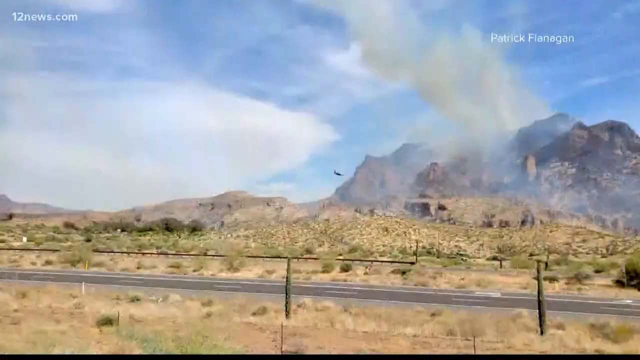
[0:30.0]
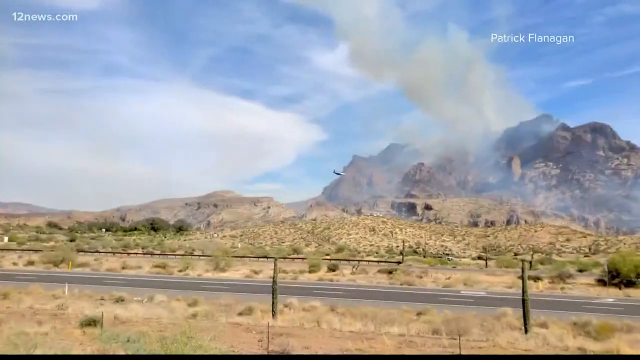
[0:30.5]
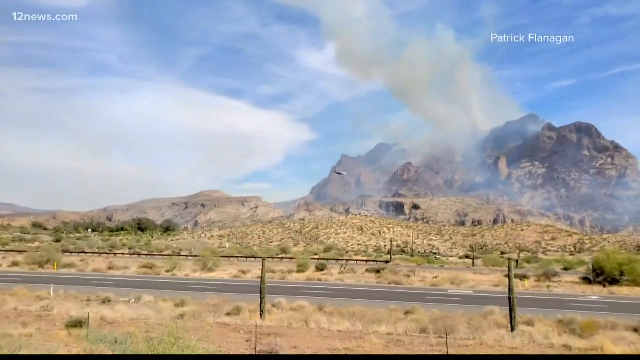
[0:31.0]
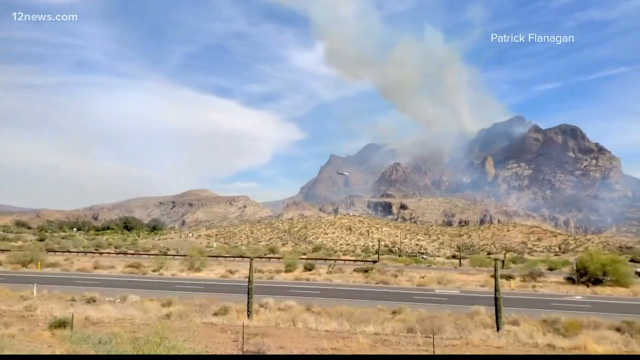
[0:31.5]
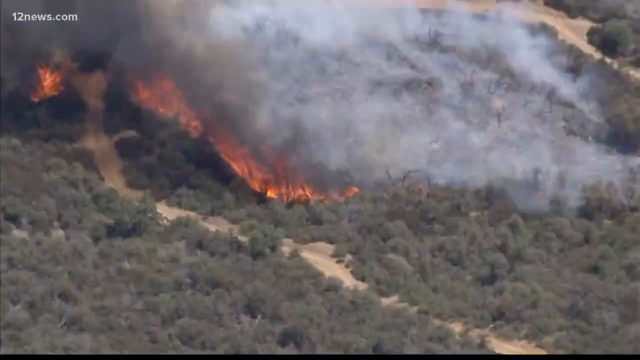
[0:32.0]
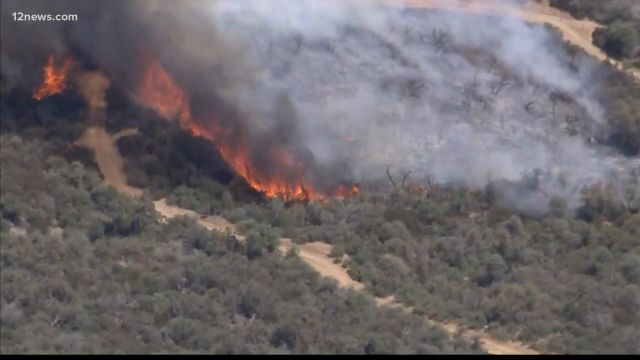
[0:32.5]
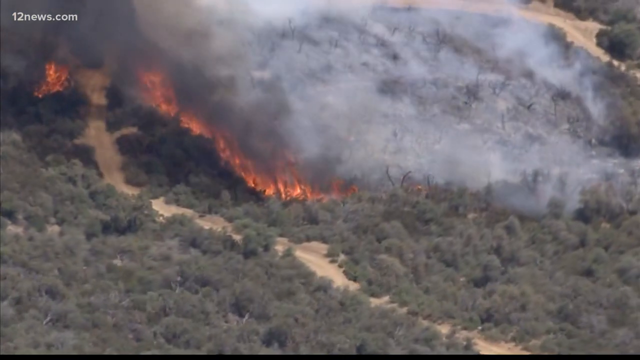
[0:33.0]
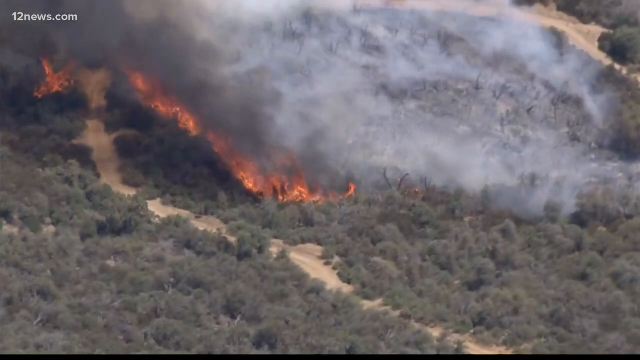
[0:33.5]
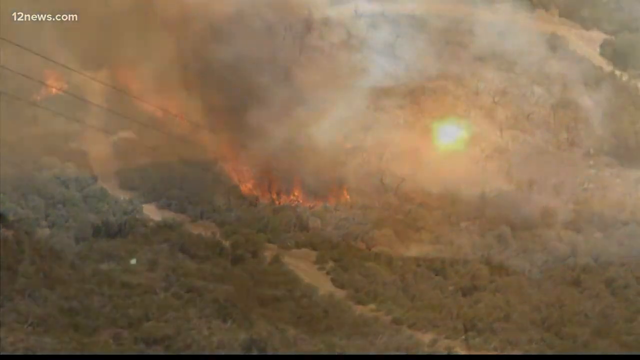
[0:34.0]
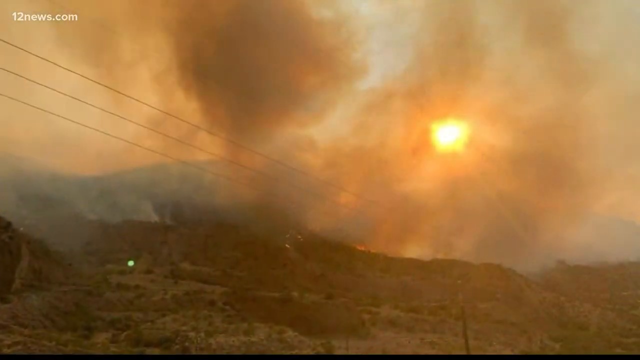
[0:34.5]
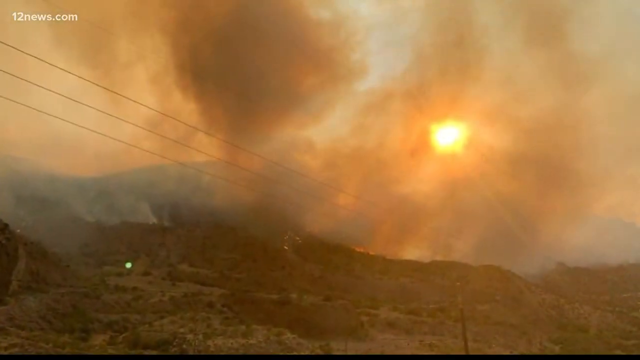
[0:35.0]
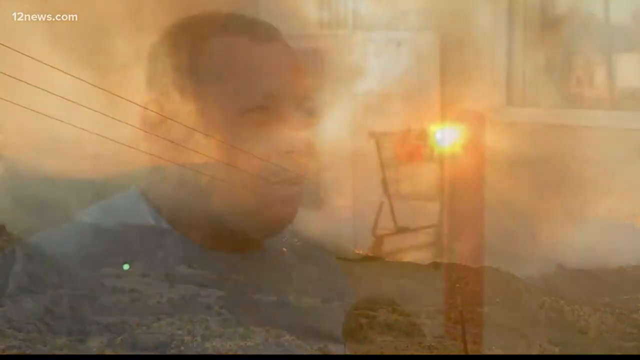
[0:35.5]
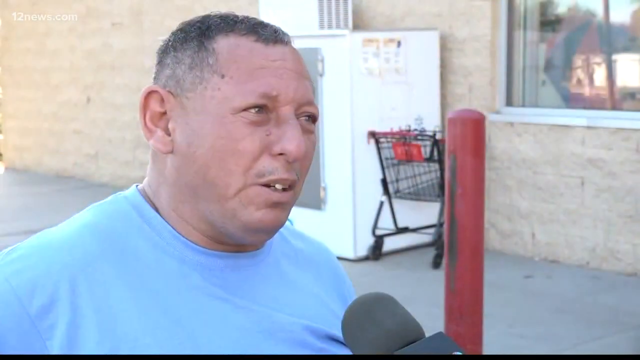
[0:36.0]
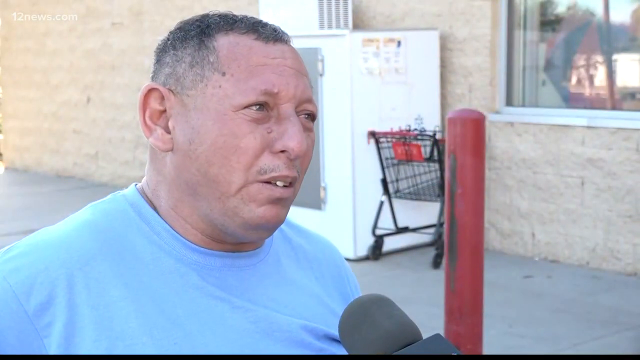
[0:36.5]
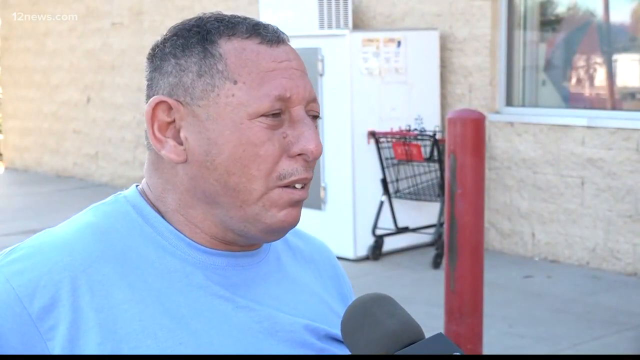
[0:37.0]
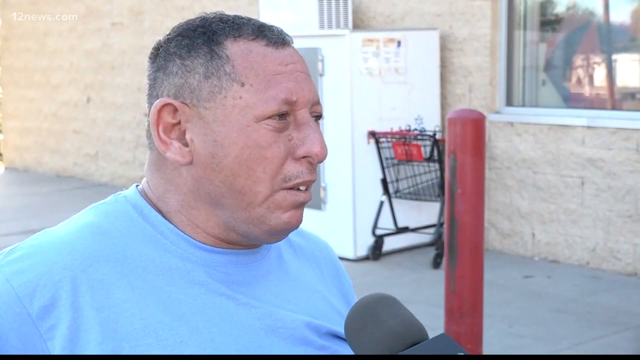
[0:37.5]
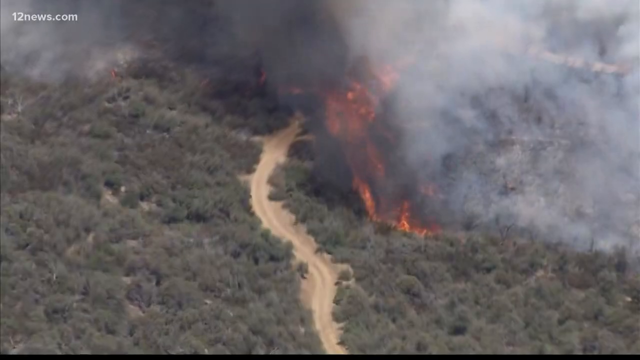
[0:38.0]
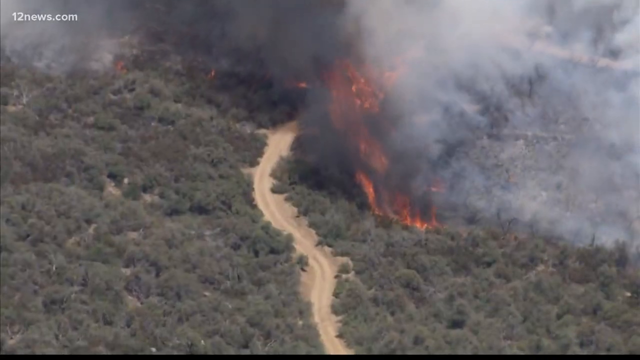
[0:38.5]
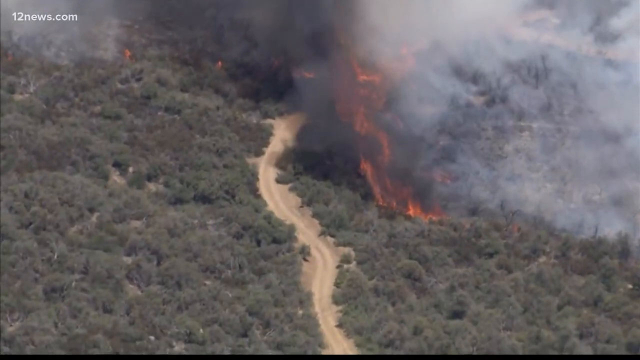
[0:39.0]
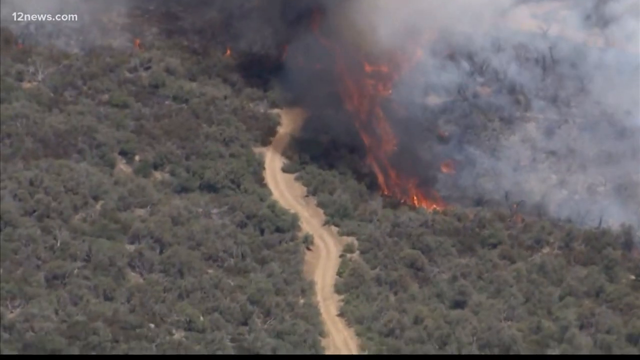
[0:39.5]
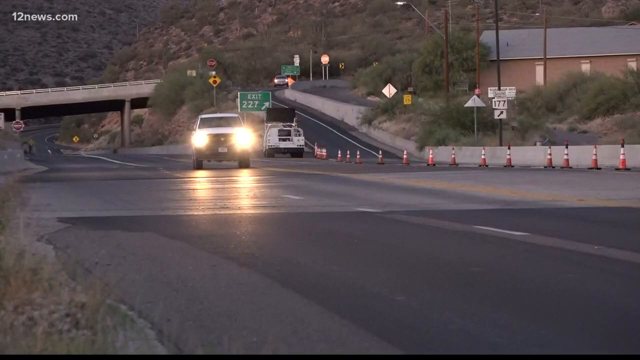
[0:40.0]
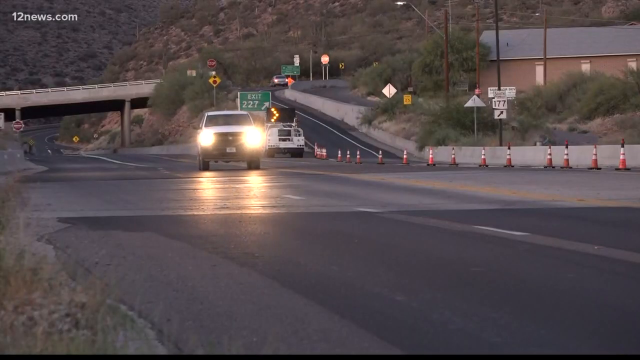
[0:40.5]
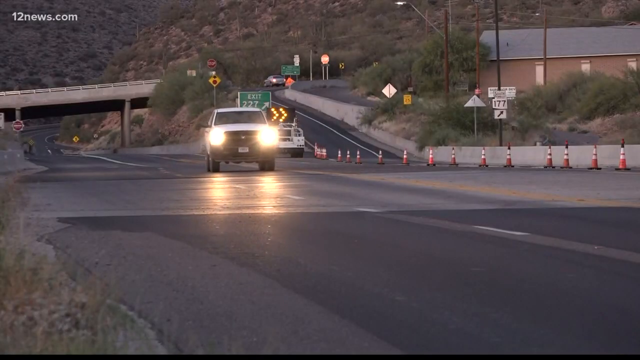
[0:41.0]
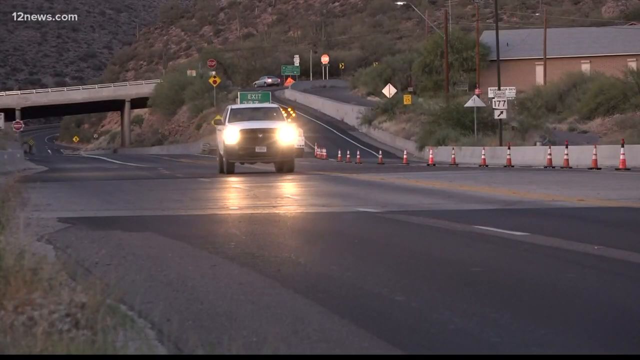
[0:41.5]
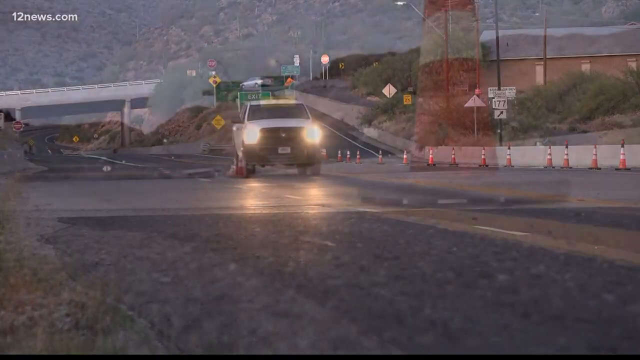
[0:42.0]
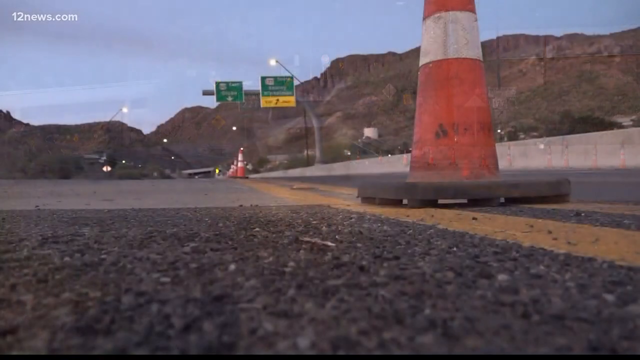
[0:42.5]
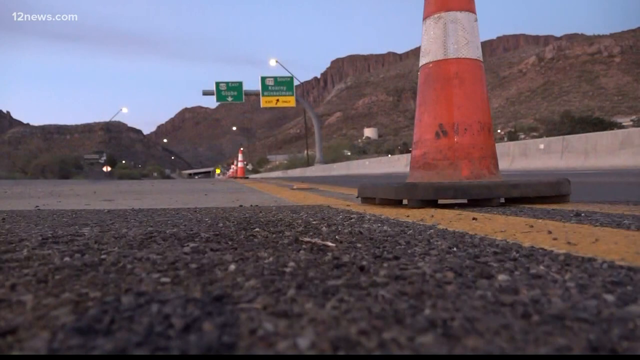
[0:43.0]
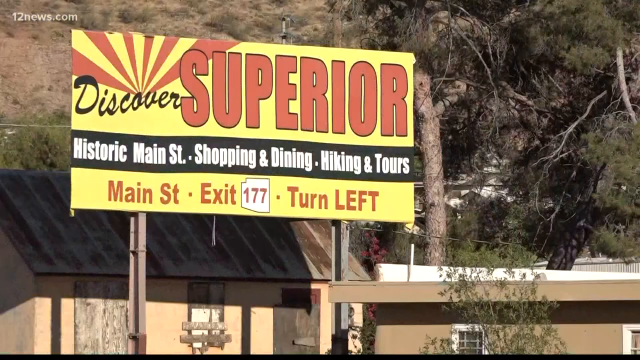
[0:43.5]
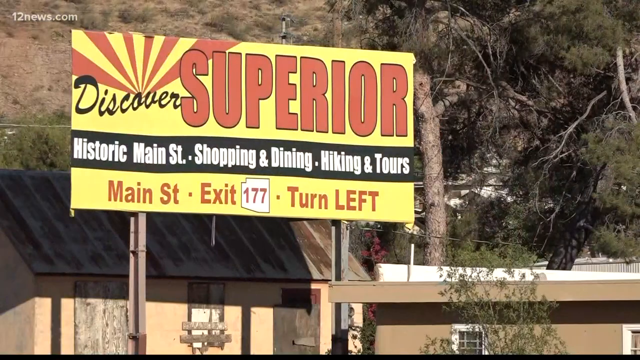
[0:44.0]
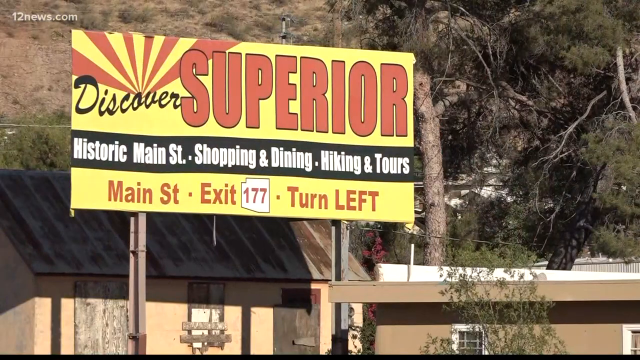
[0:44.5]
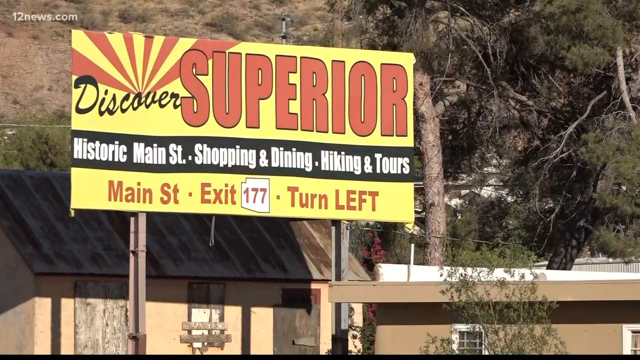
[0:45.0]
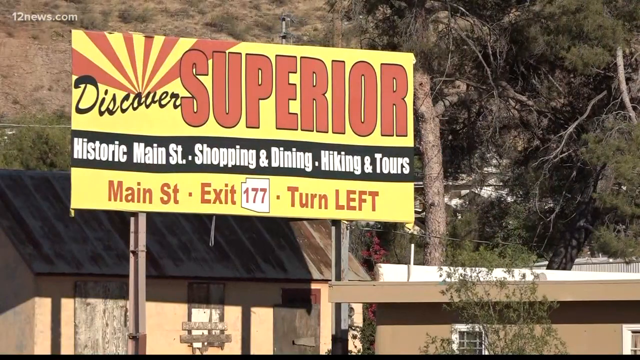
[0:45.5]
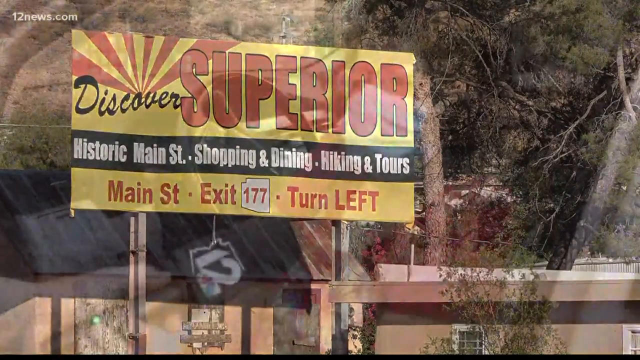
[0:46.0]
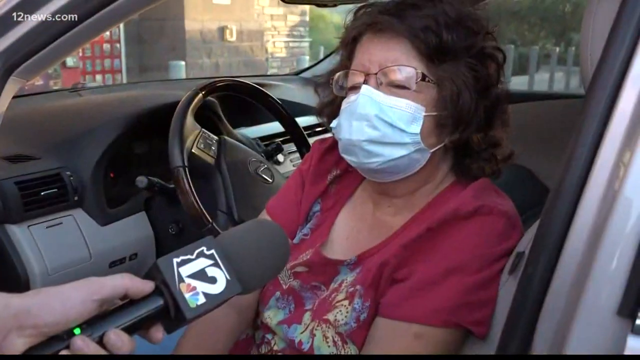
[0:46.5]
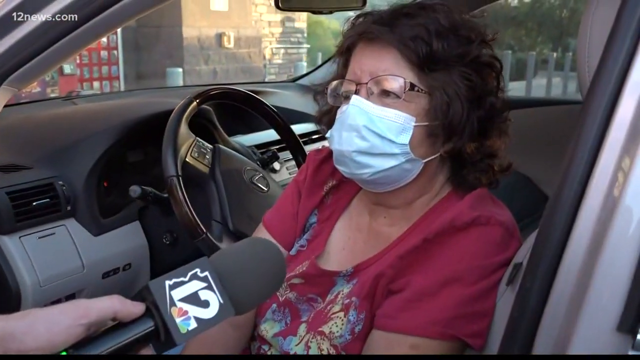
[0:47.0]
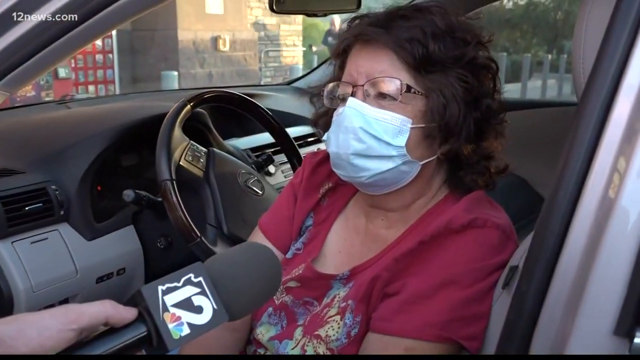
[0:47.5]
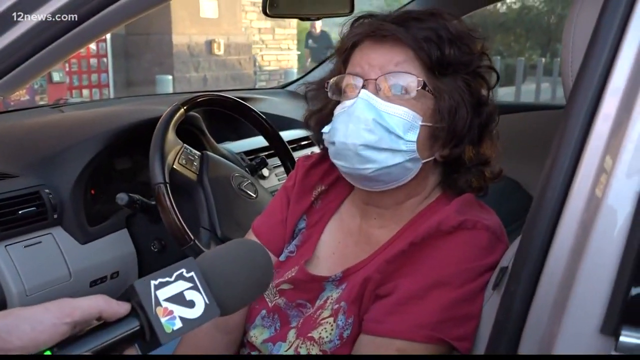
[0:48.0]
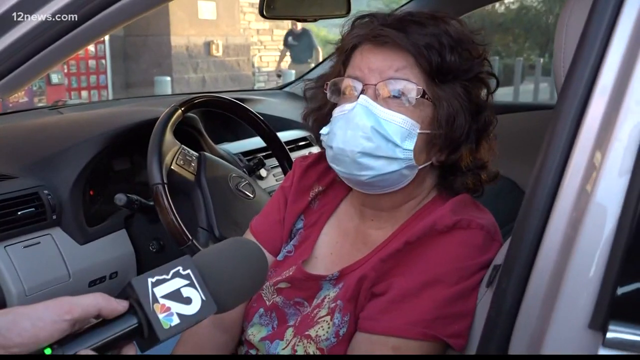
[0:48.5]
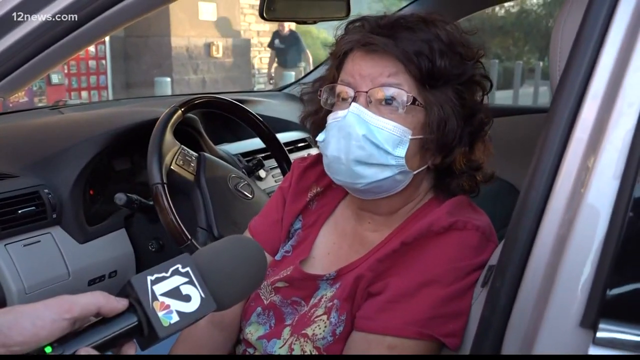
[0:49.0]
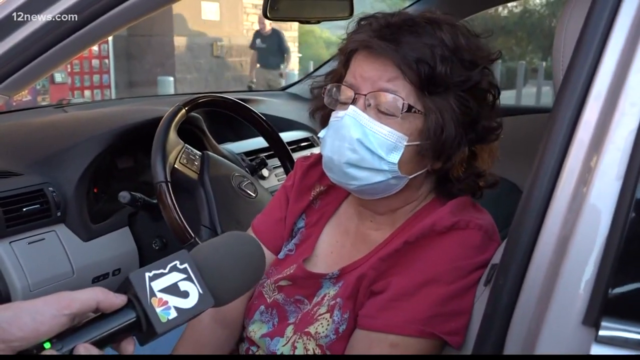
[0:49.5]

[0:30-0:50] Dry desert area is burned by wildfires; an entire hillside has been completely engulfed and burned, with large clouds of smoke billowing into the blue sky. A panning shot follows what appears to be a plane attempting to drop water on the fire, before a transition to footage of the wildfire burning some time ago. The fires fill the sky, turning the blue sky an orangish hue with dark, thick black smoke. The video cuts to an eyewitness account from a man who survived the fire, then to footage of the fire continuing to burn near a dirt road as the scene begins to brighten. The same footage as before is shown, diverting people and traffic with traffic cones, before a cut to a sign reading "Discover Superior Historic Main Street shopping and dining, hiking and tours on Main Street exit 177 turn left".